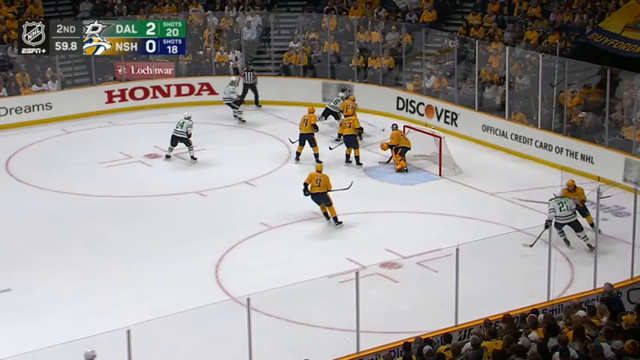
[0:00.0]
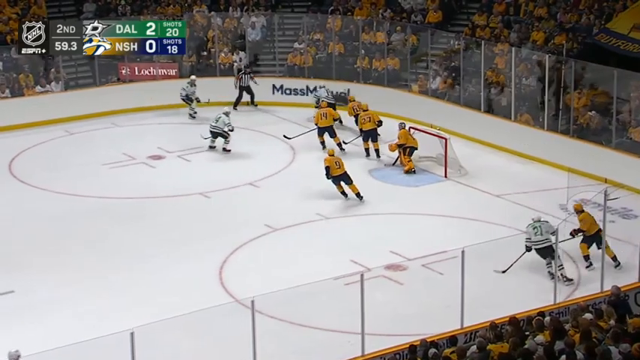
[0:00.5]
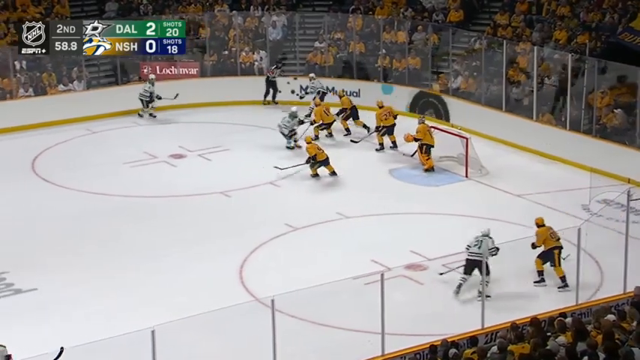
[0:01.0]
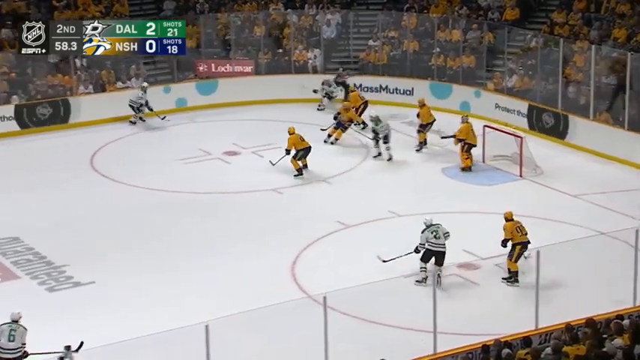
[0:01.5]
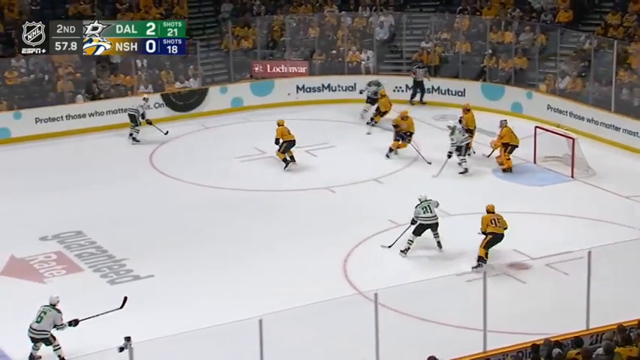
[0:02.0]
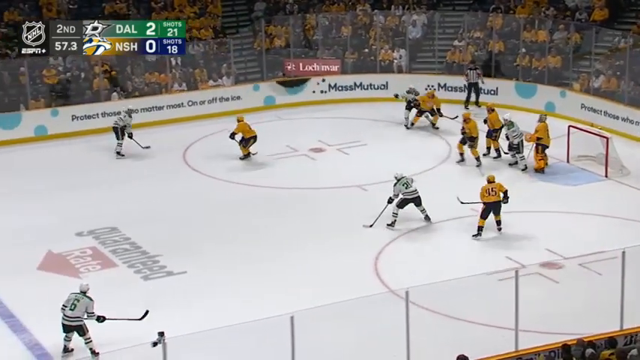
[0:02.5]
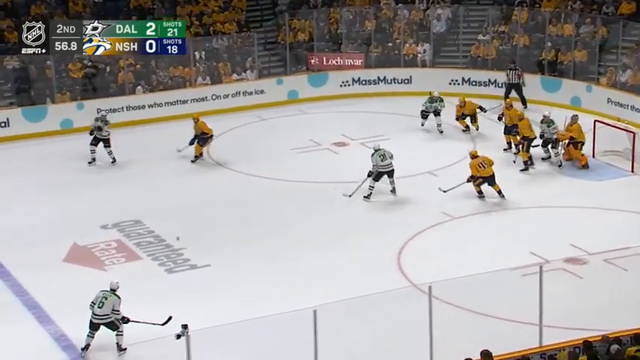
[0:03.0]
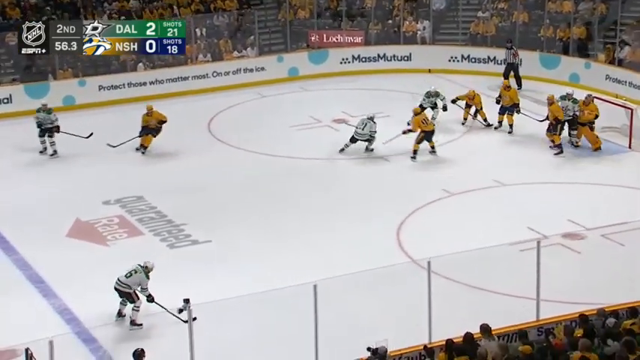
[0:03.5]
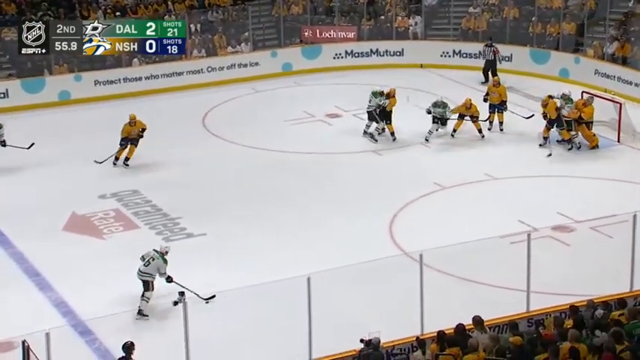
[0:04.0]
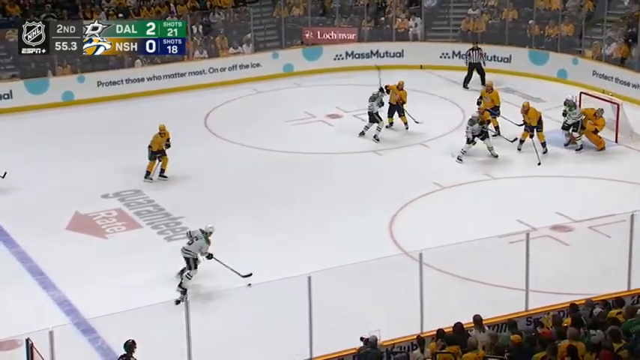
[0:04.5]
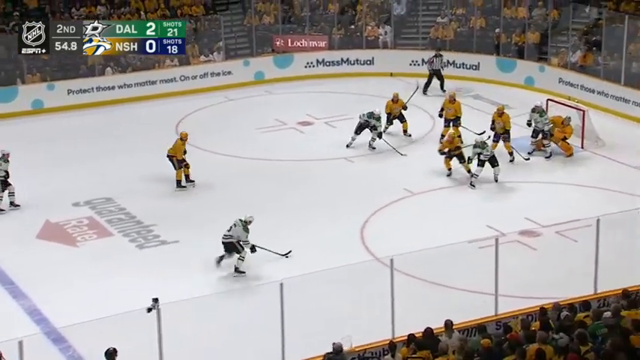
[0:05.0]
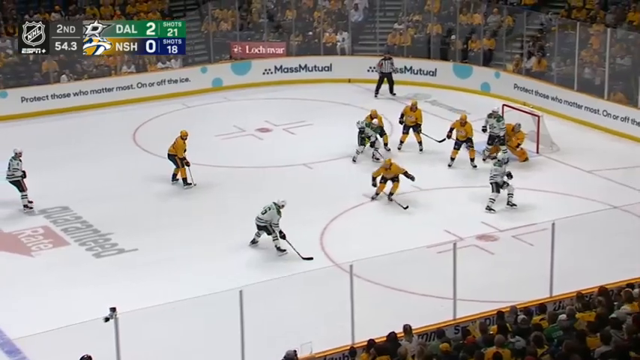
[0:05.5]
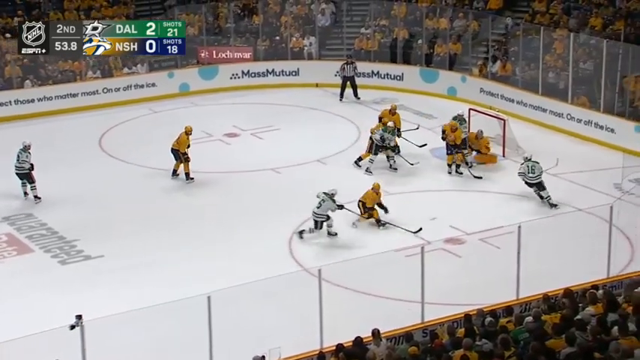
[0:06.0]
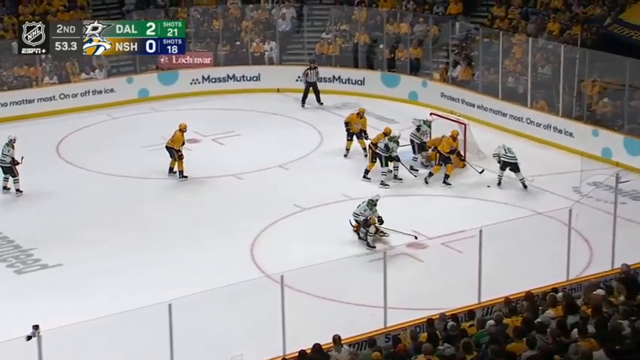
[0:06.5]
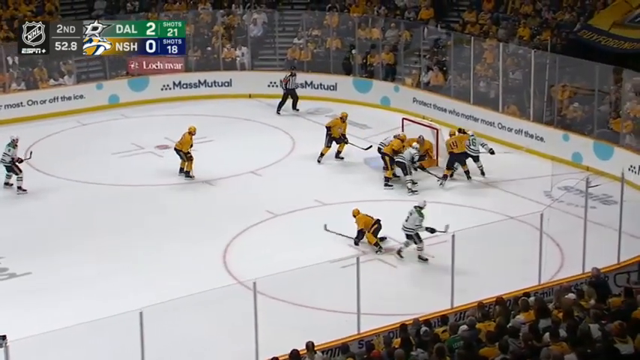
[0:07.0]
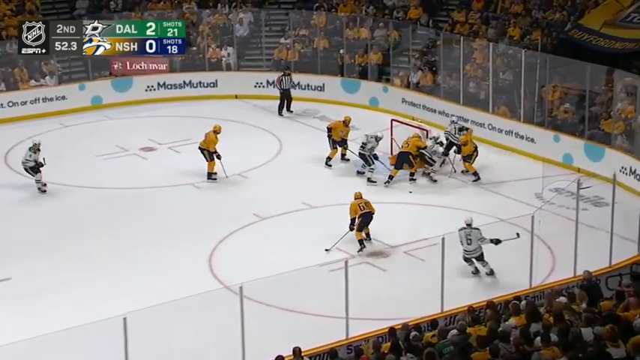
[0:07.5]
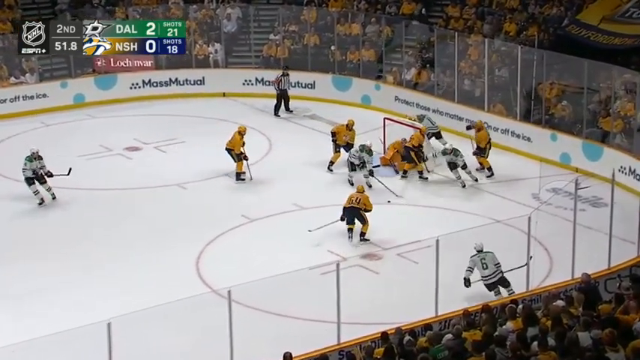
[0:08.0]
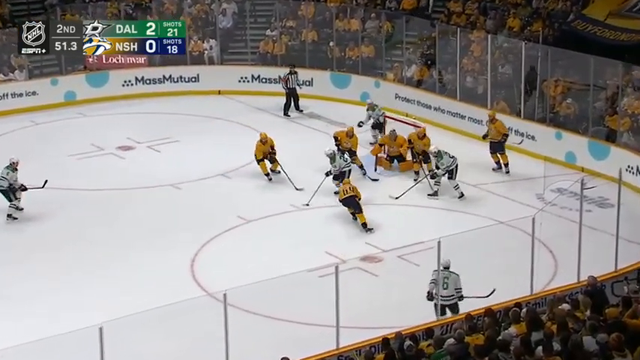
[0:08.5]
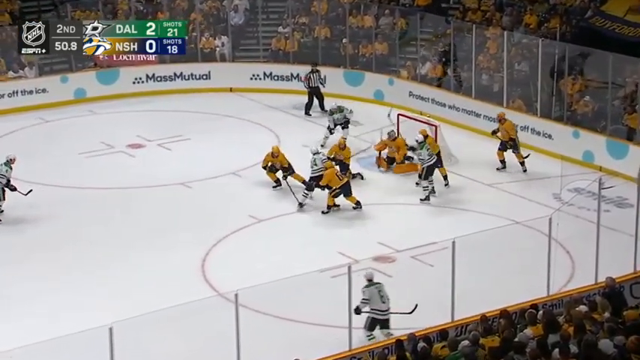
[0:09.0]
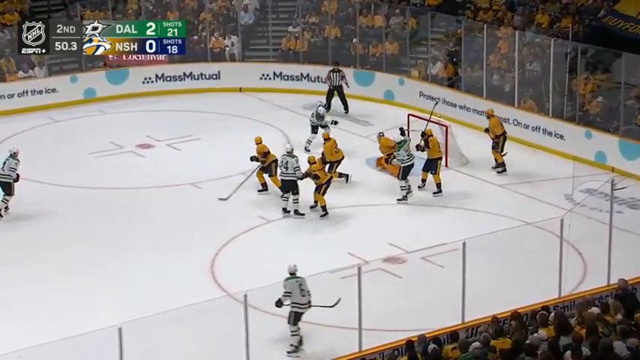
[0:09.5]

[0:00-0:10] A hockey game between Dallas and Nashville is underway, with the score at 0-0. The players start to run. The Nashville team is apparently the one in orange, while the other team wears light uniforms.